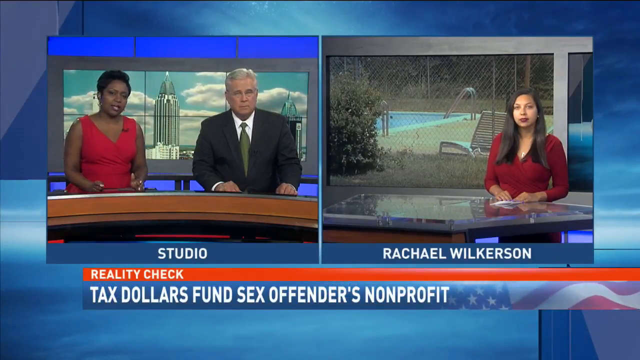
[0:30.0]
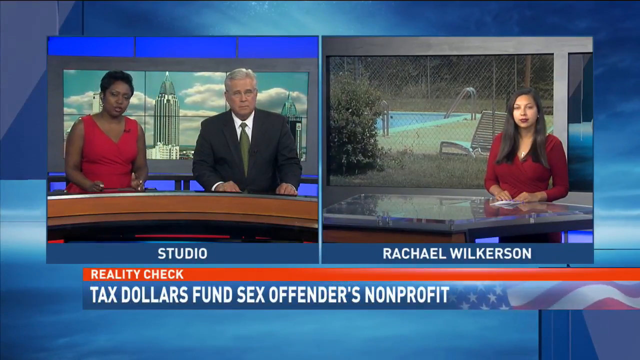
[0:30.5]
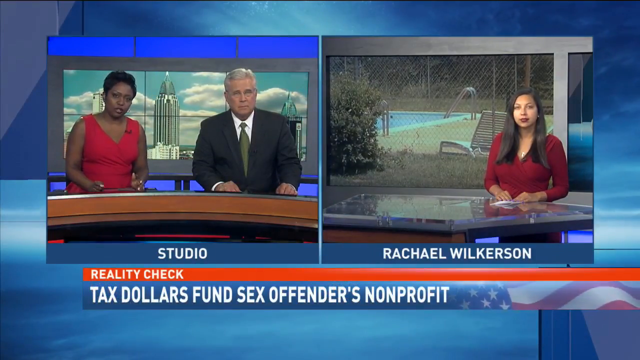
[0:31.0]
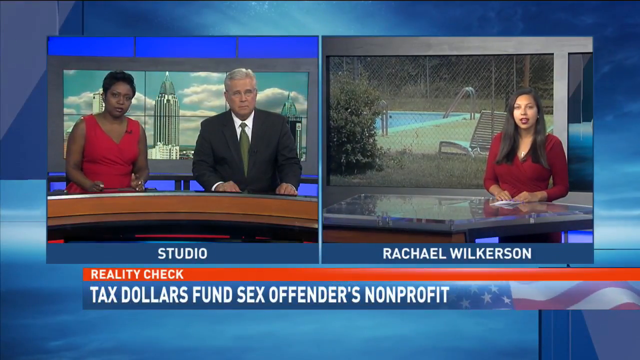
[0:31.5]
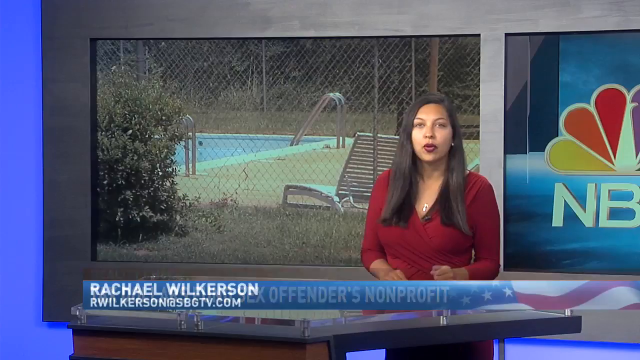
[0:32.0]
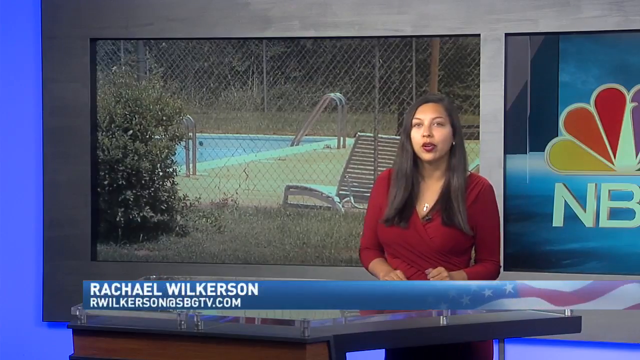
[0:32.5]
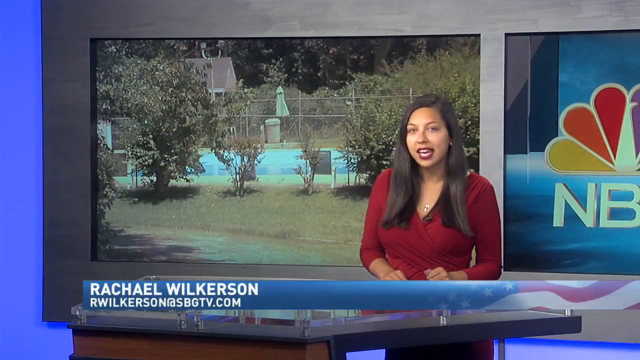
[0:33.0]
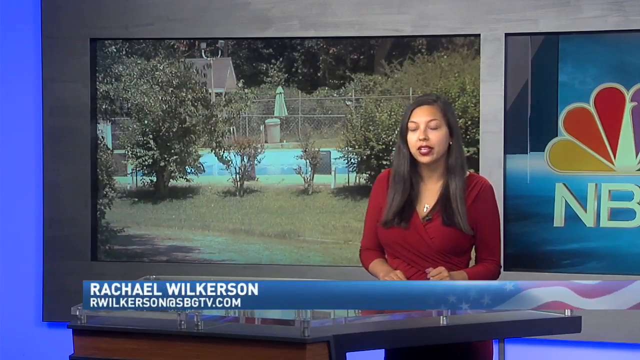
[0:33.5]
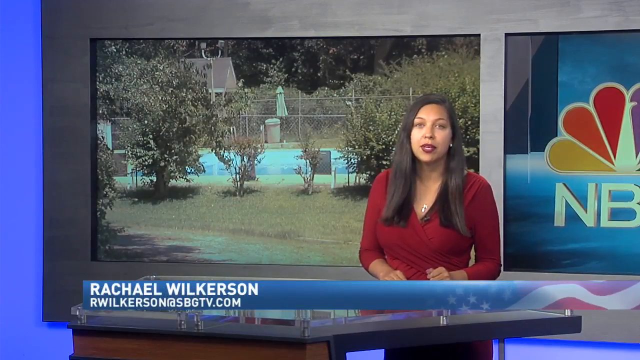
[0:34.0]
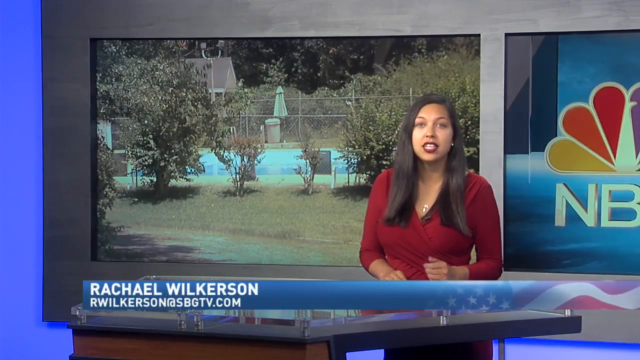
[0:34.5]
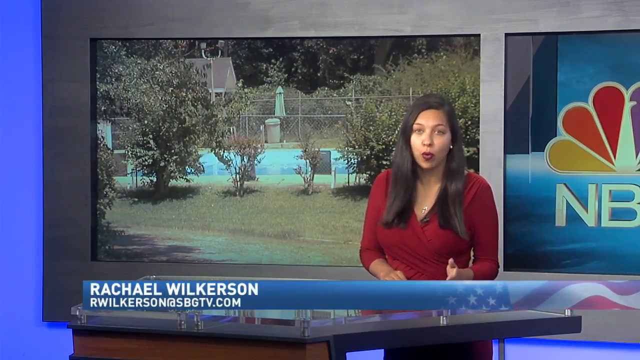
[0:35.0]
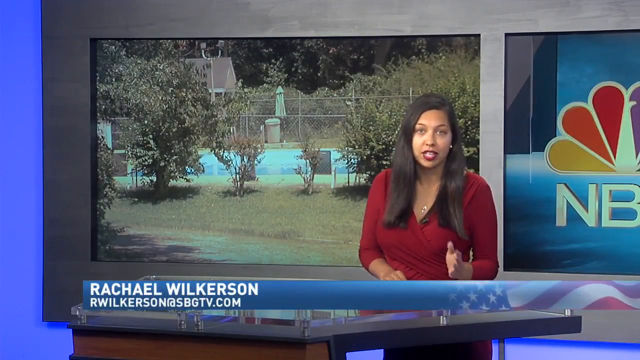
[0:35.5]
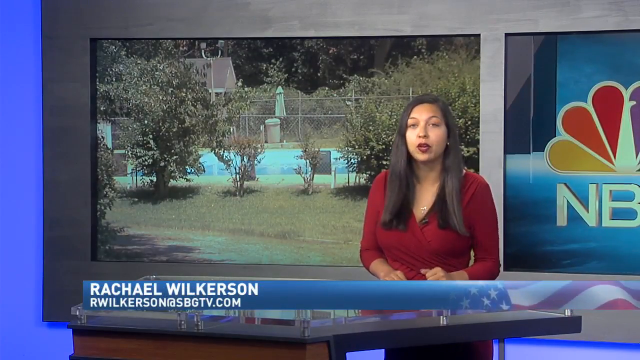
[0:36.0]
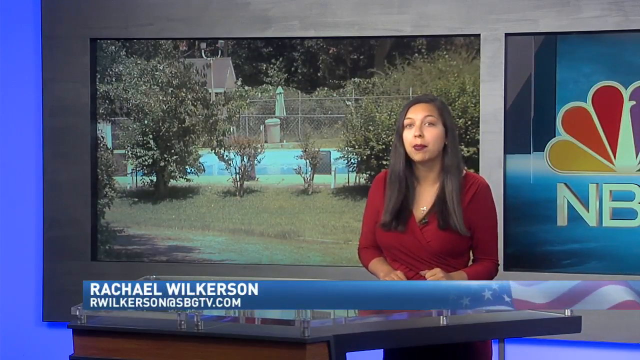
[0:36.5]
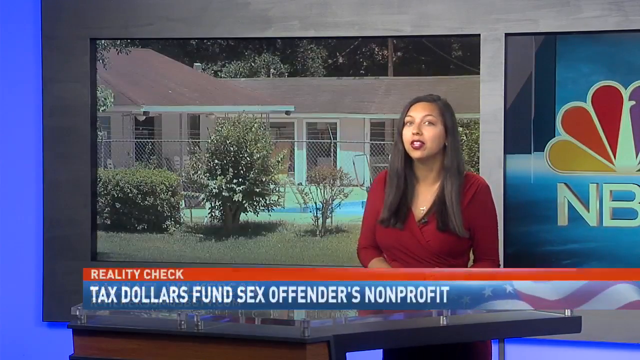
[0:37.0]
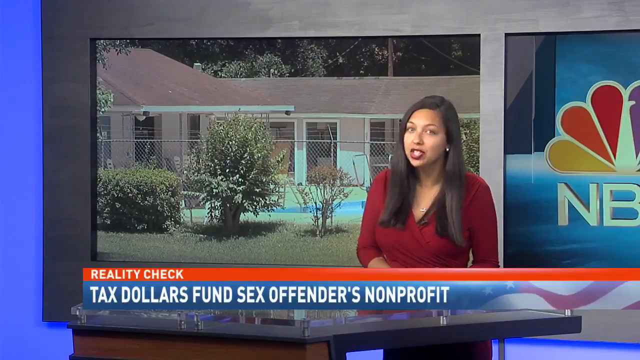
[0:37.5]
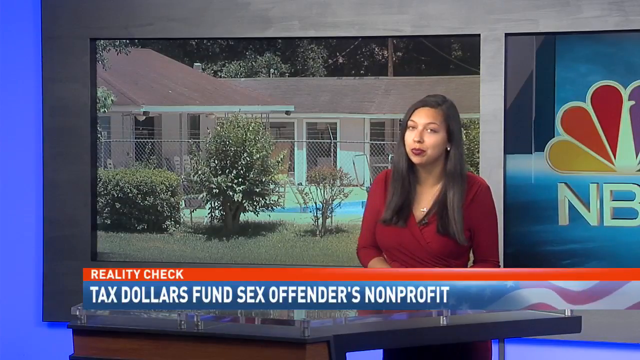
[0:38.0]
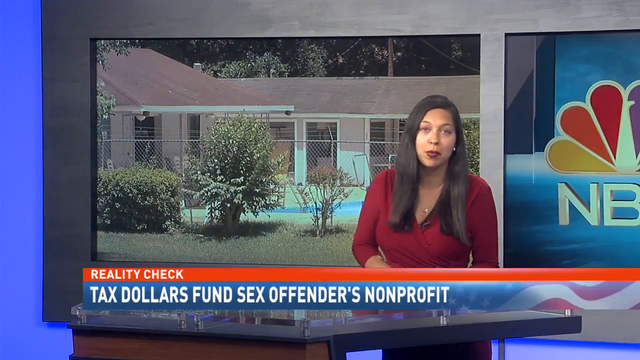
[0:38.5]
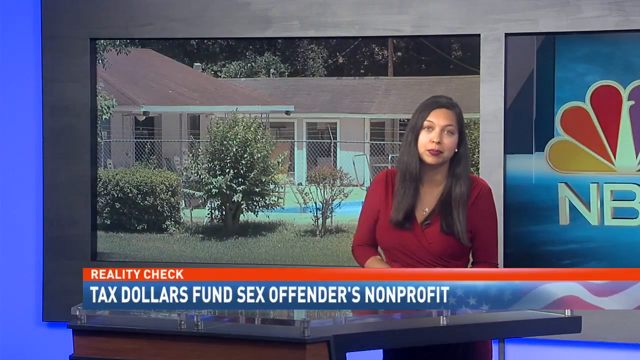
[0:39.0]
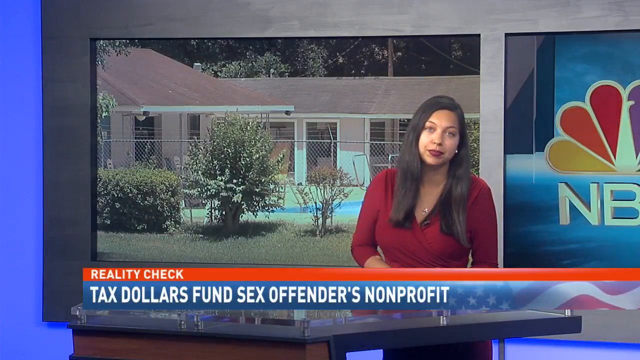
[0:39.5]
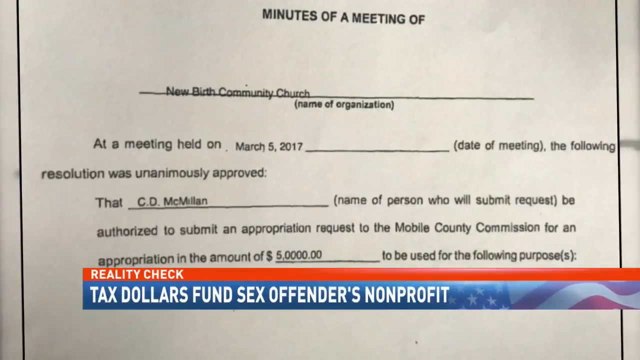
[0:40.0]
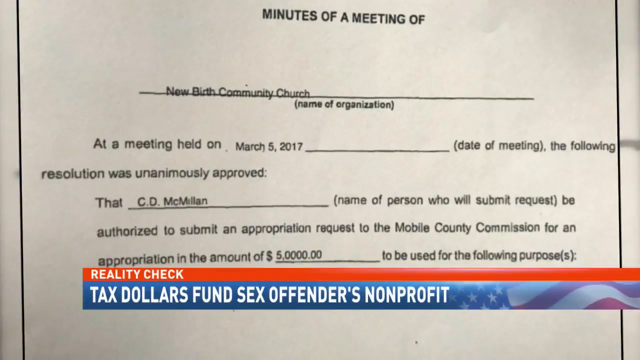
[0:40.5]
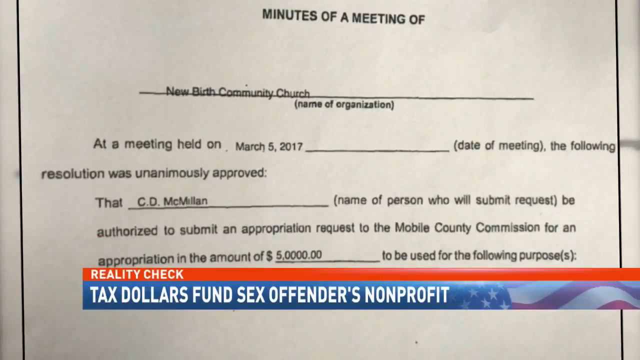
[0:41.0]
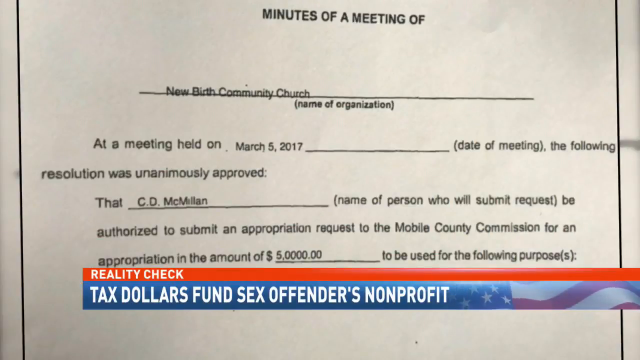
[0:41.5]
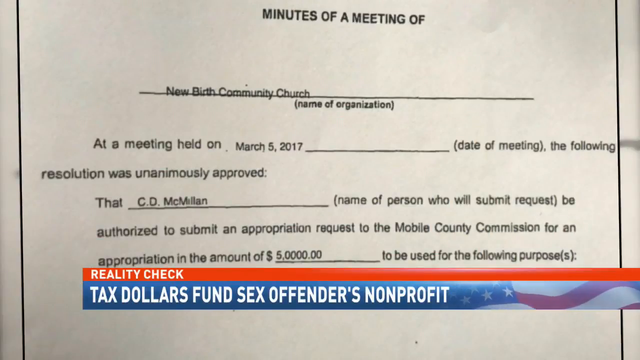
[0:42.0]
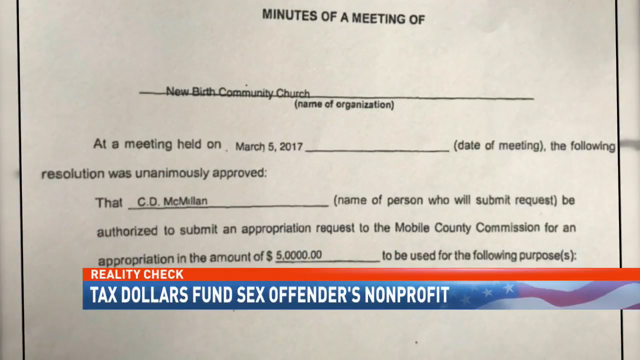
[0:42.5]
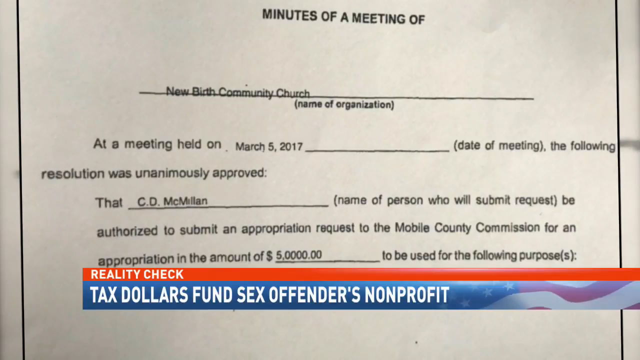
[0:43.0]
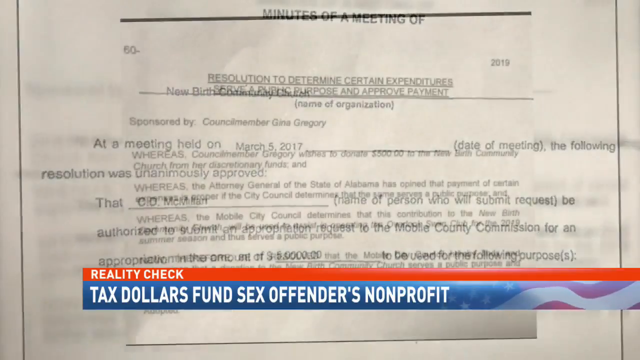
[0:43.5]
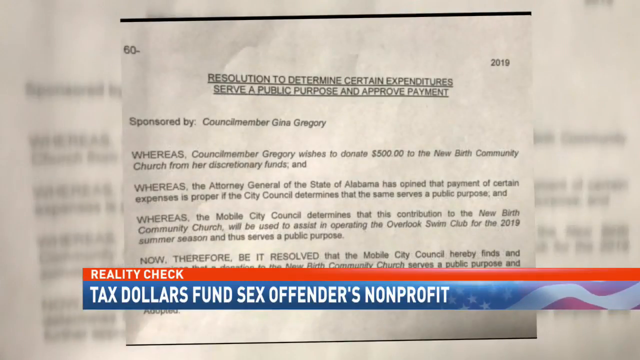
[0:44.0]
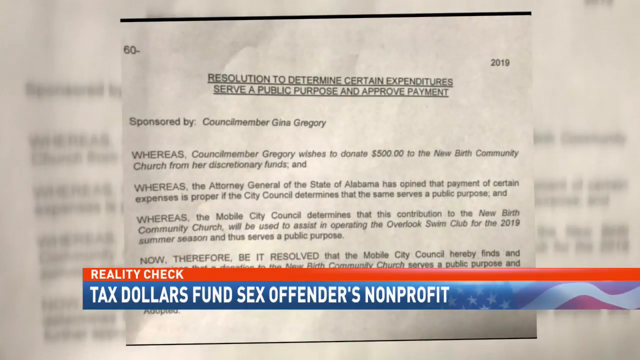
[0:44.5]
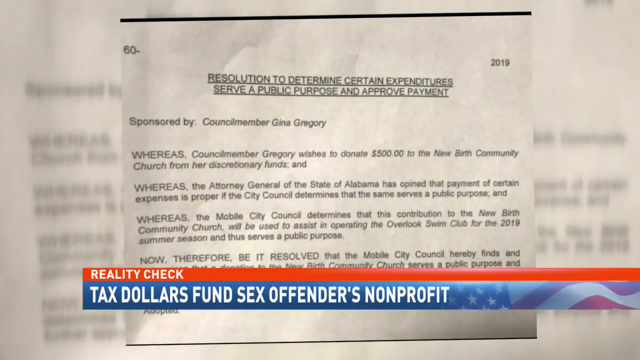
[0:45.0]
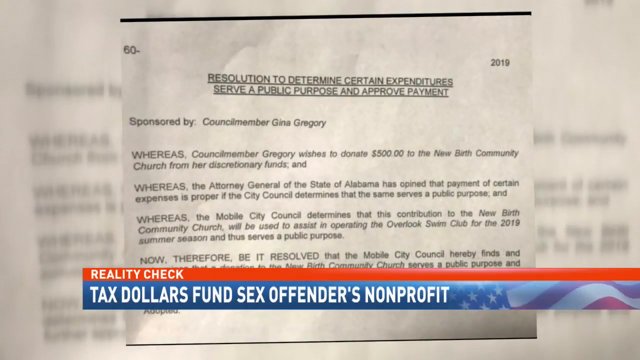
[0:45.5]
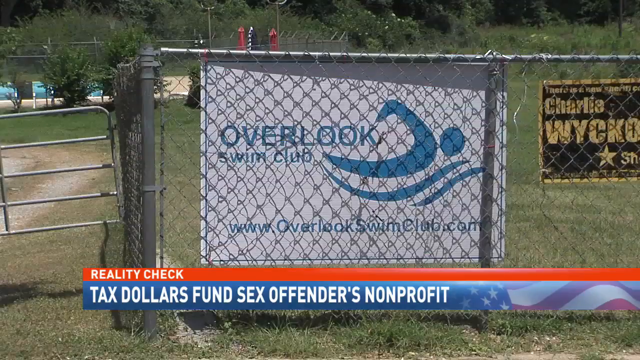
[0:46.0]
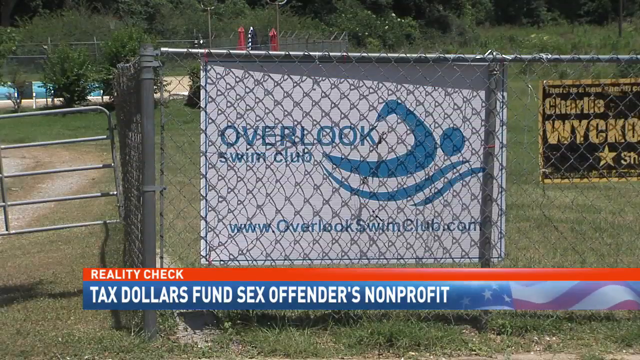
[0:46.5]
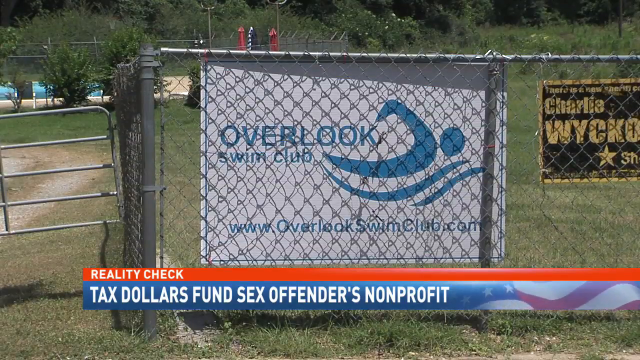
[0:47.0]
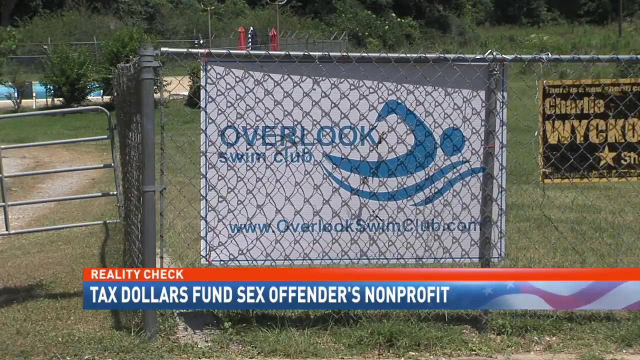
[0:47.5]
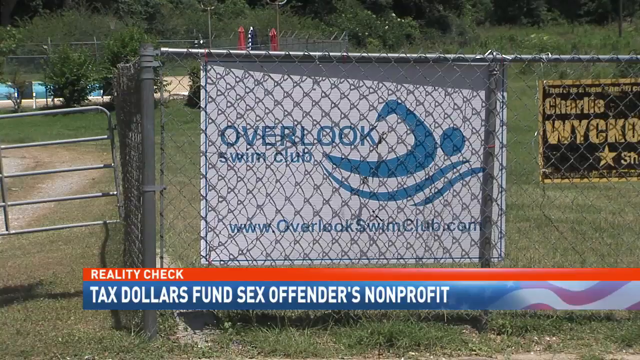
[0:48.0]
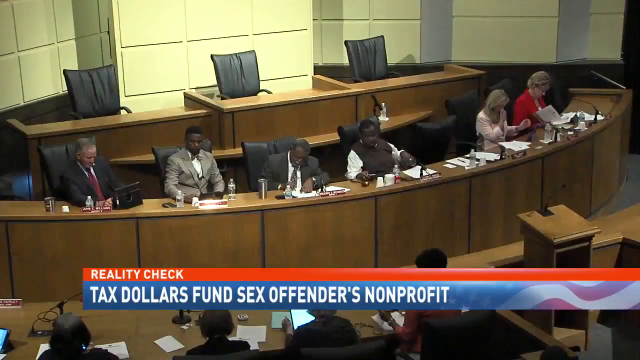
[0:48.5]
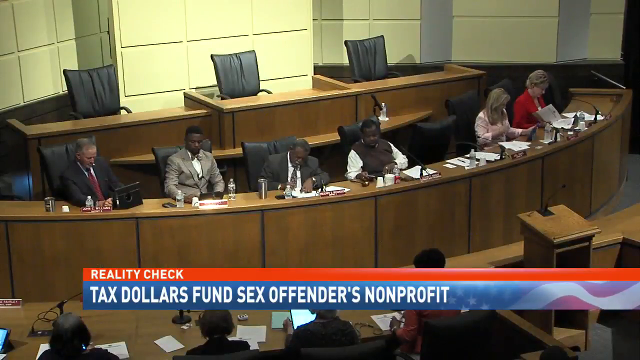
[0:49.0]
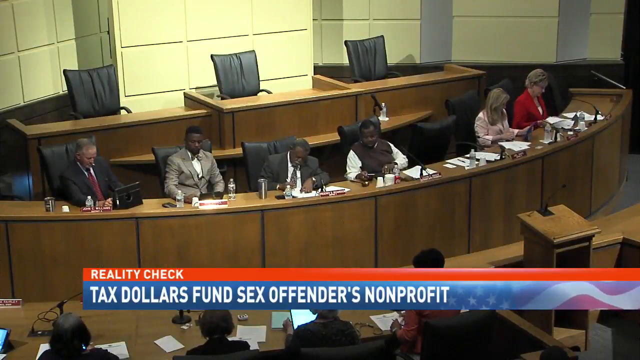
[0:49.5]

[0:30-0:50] A woman in red stands at a news table with the text "Rachel Wilkerson" under her, and the pool seen earlier appears behind her on a video screen. She has black hair, is slightly tan, wears a necklace and a red dress, and holds a small paper between her hands while standing. On the left side of the screen are two news anchors, one of African American descent and the other an older Caucasian man with a green tie and white hair. Behind them, six TV screens show the city they are in, and under them it says "studio." Behind both screens is a dark and light blue sky-like background. Text under them reads "reality check" and "tax dollars fund sex offenders non-profit" in front of a USA flag.